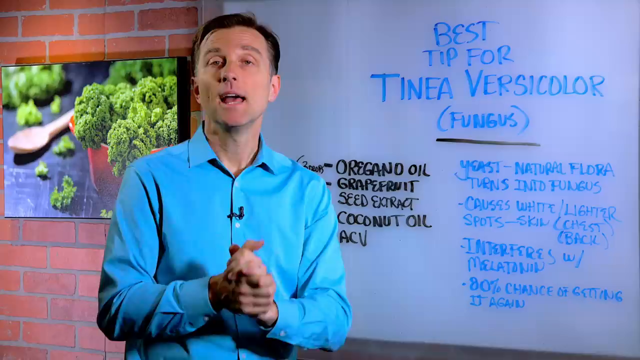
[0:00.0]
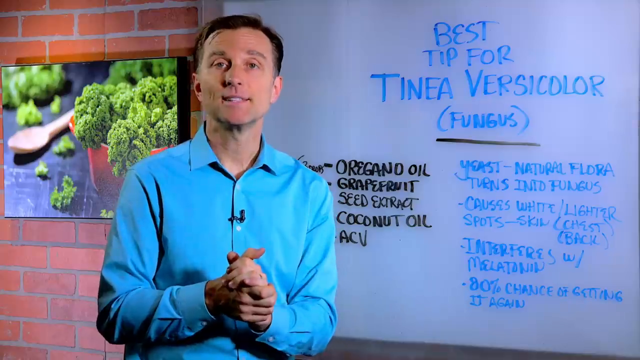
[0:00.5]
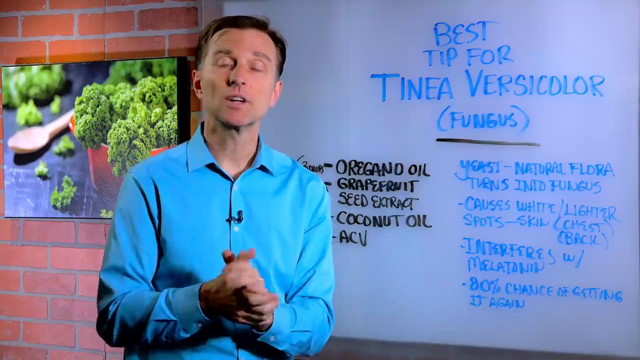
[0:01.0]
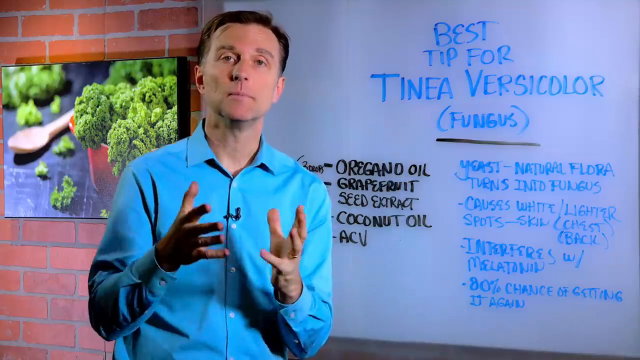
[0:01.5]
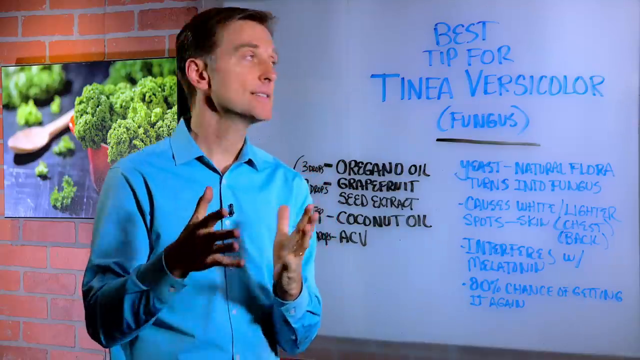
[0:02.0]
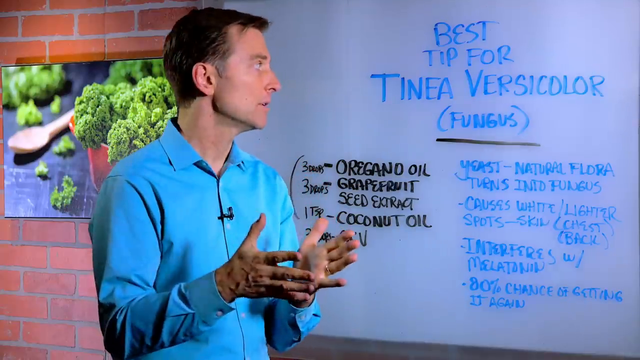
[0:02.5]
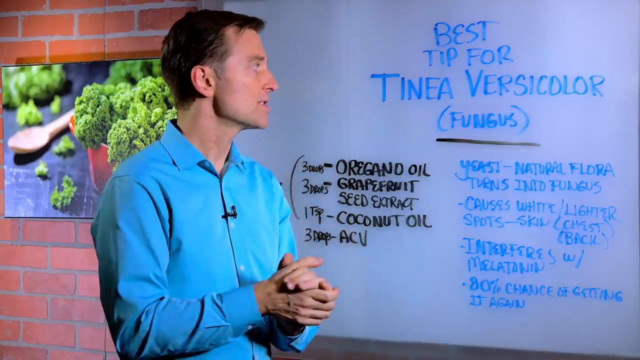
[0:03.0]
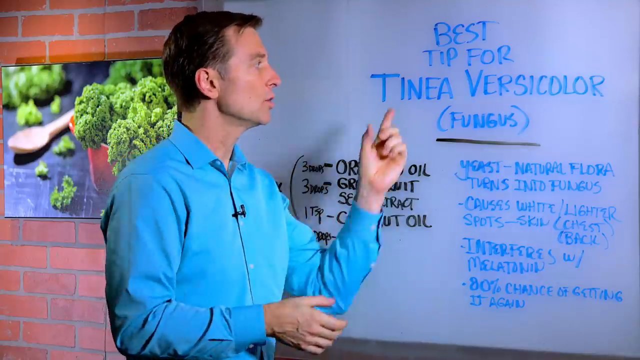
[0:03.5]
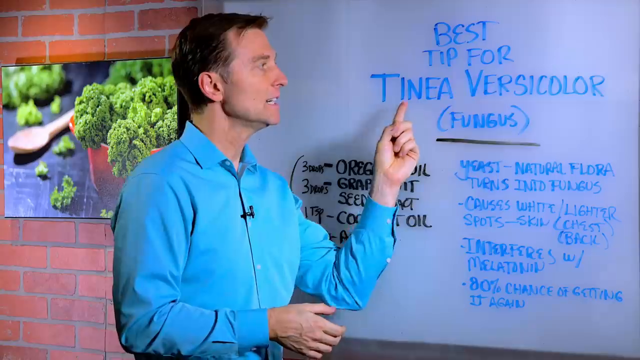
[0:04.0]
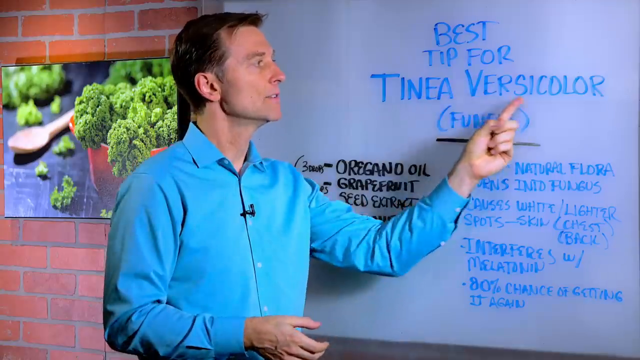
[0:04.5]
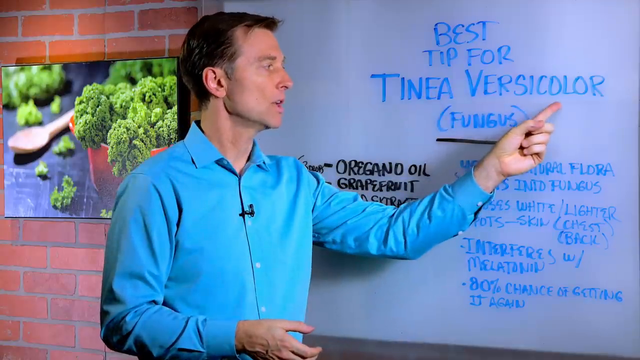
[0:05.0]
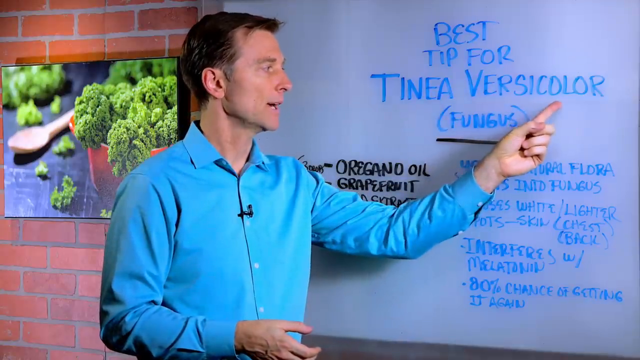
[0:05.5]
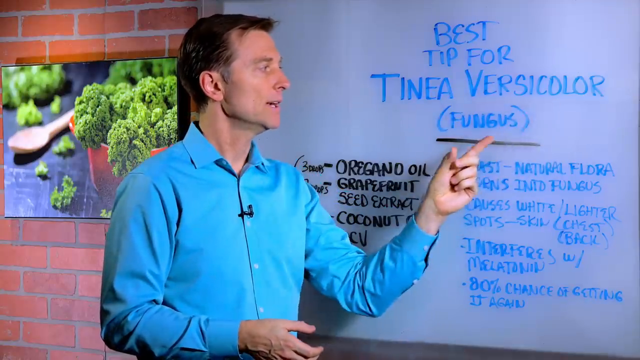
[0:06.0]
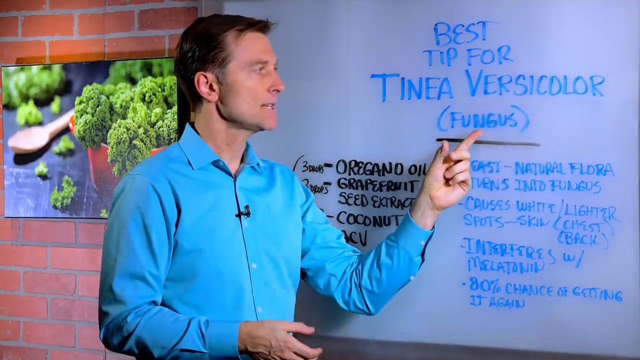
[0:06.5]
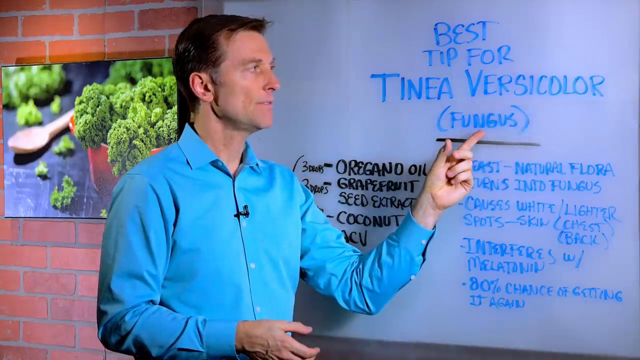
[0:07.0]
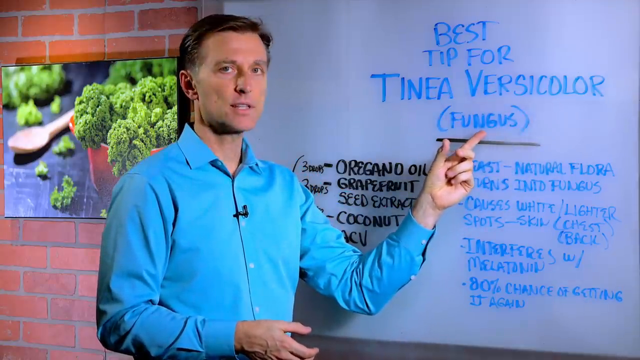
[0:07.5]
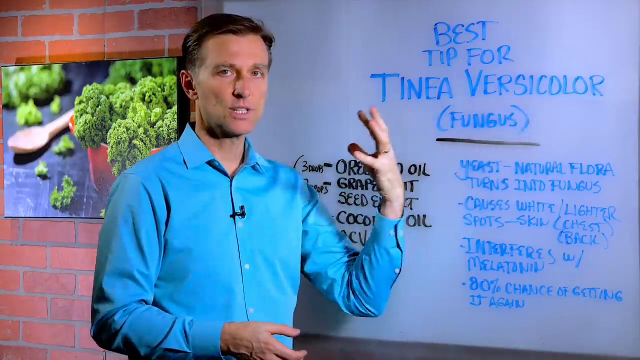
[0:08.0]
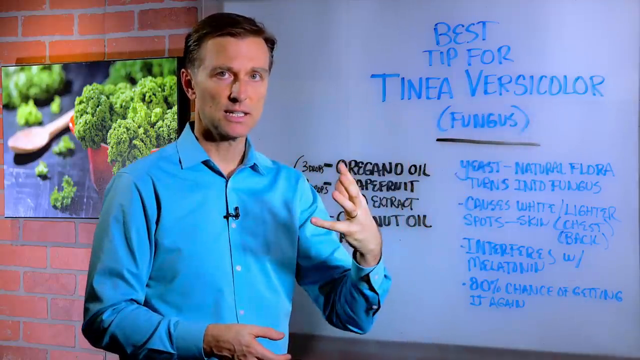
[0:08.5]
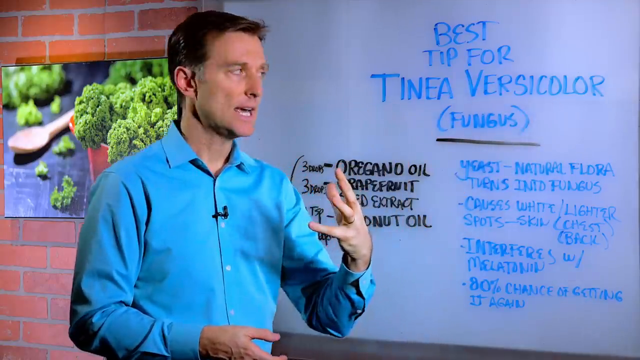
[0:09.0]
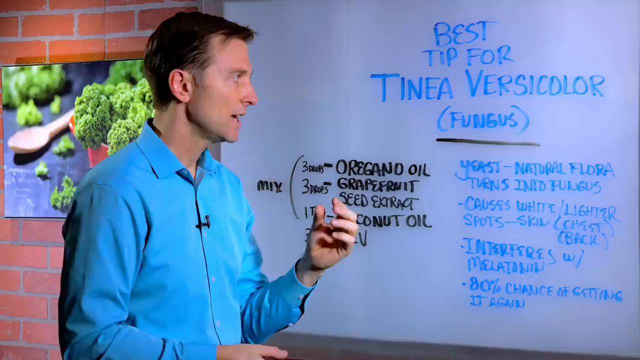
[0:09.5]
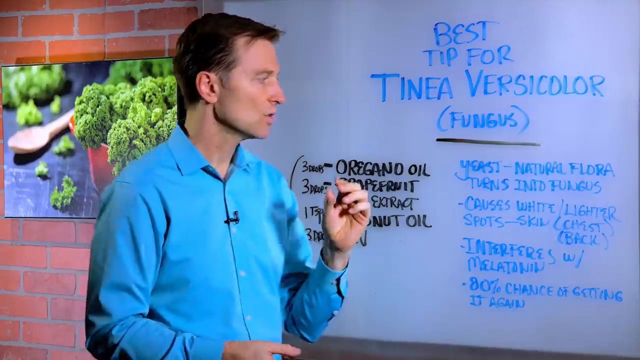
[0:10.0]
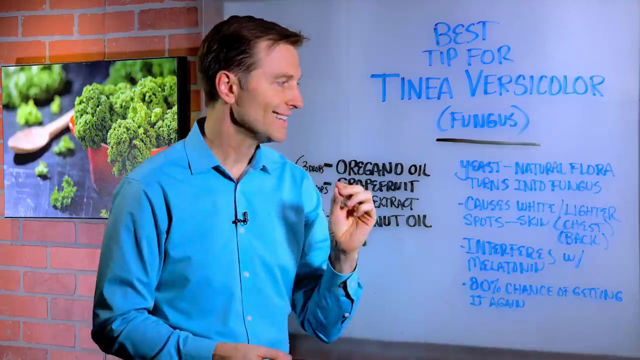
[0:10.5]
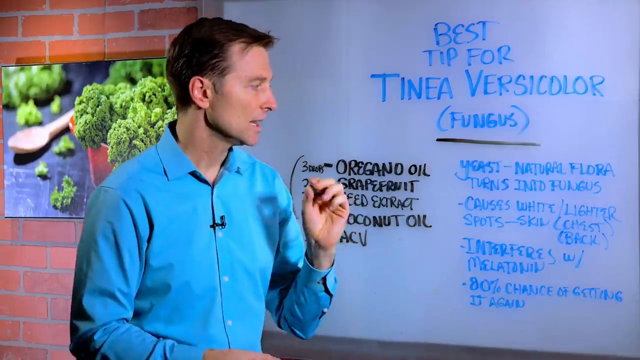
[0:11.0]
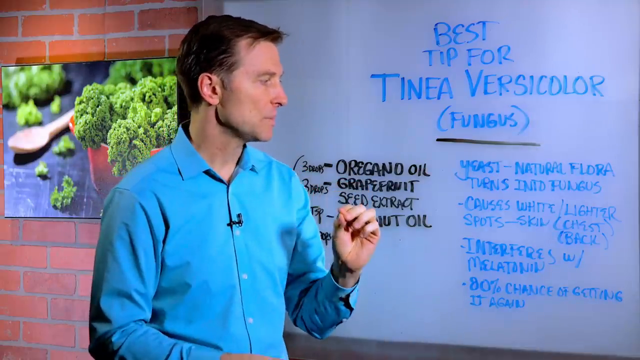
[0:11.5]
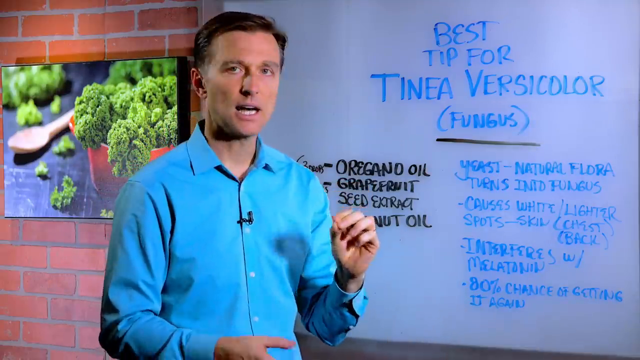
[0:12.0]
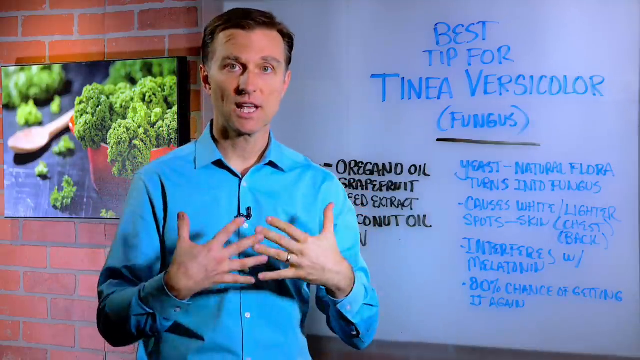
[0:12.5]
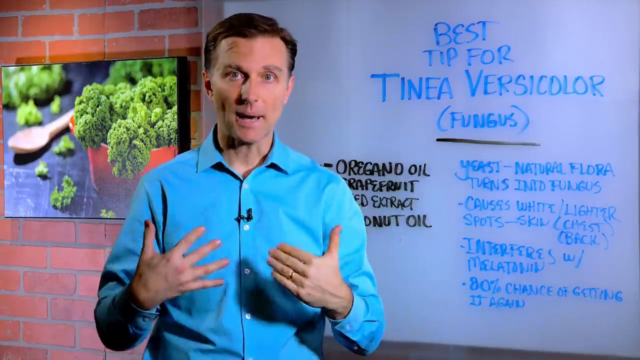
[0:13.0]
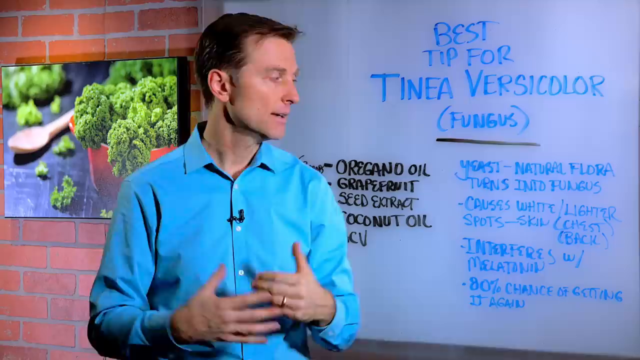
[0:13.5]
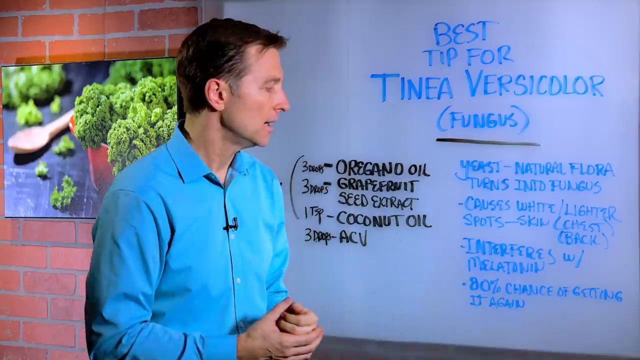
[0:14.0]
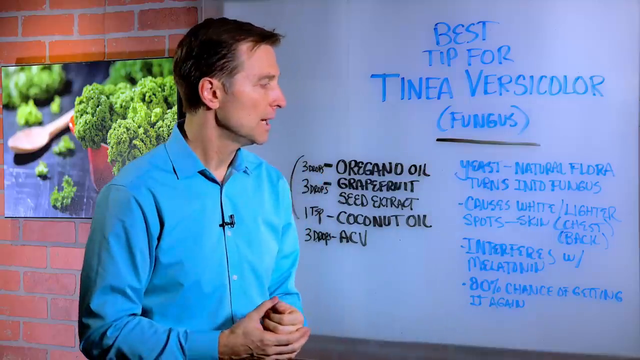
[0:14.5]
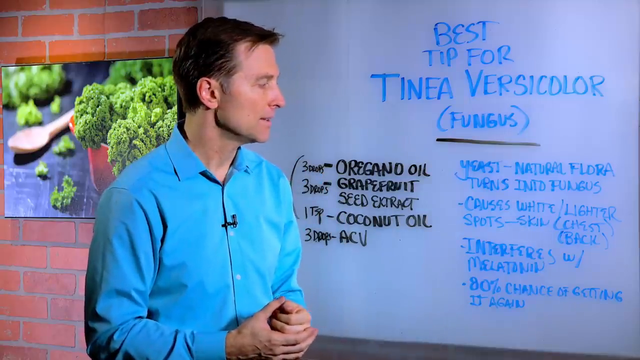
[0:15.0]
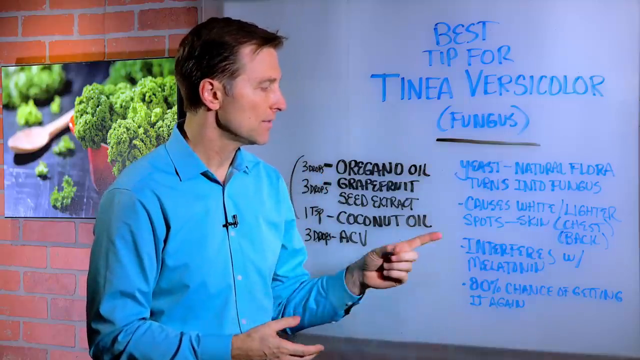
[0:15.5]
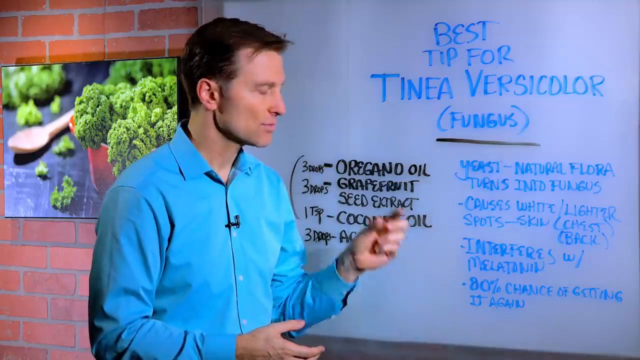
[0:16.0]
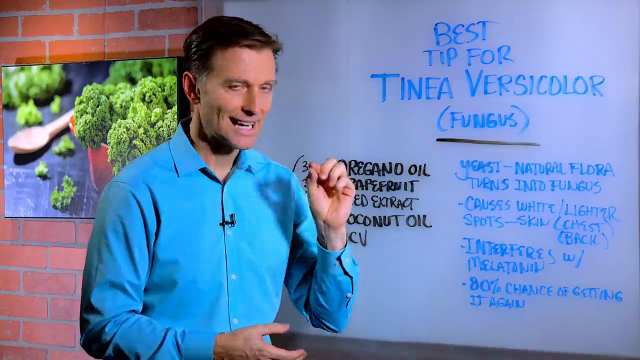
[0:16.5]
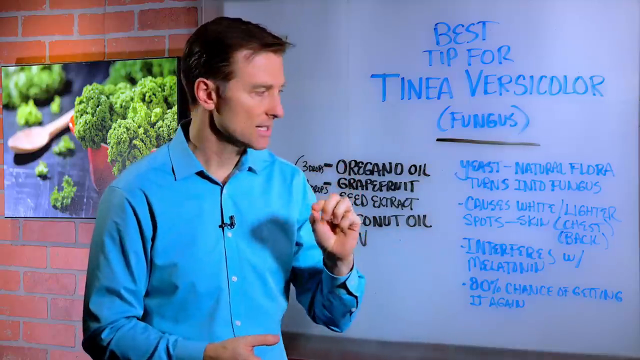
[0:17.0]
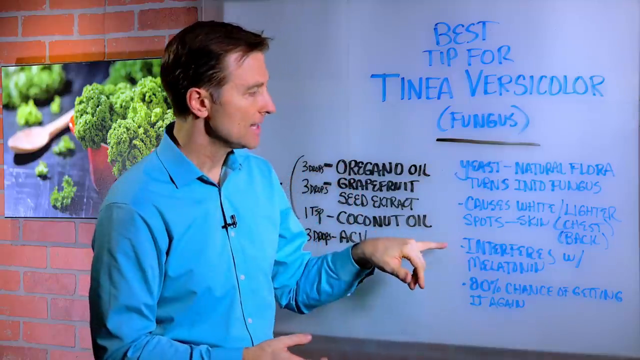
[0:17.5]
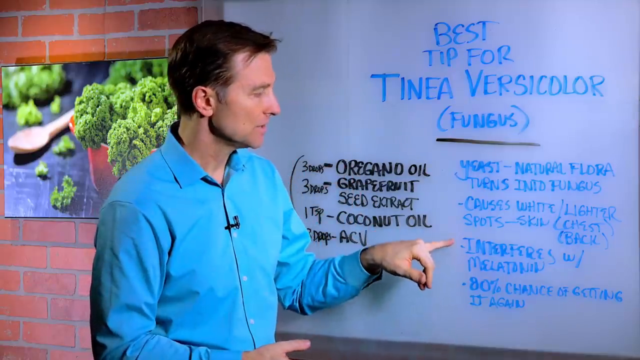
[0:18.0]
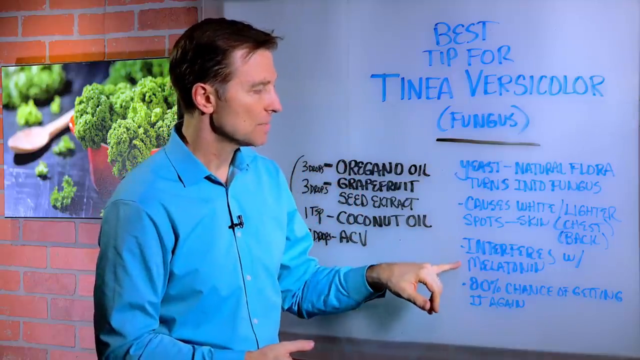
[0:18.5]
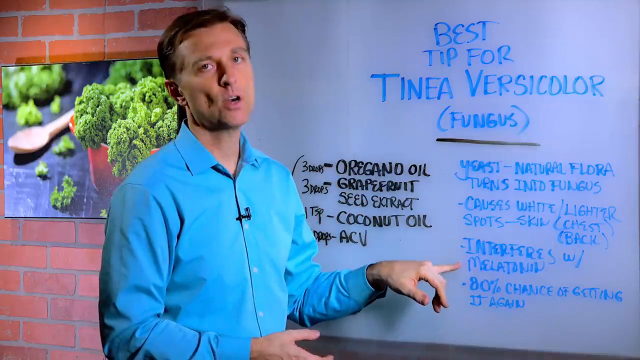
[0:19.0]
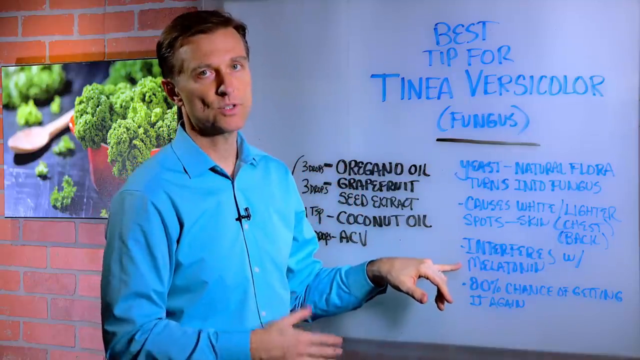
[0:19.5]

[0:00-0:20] A man in a bright blue button-up shirt stands at a board headed "best tip for tinea vesicular fungus". The board has a list of items in black text (oregano oil, grapefruit seed extract, coconut oil, ACV) and more dot points in blue text under yeast. He talks to the camera, looks at the board, and points at tinea vesicular and then at fungus. He then motions toward himself, toward his chest area, while still talking, and then points at the yeast dot points. To the side of him is a picture on a TV, apparently a picture of fungus, a green ring fungus.